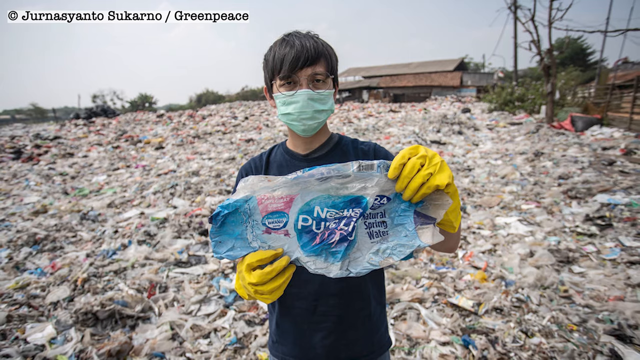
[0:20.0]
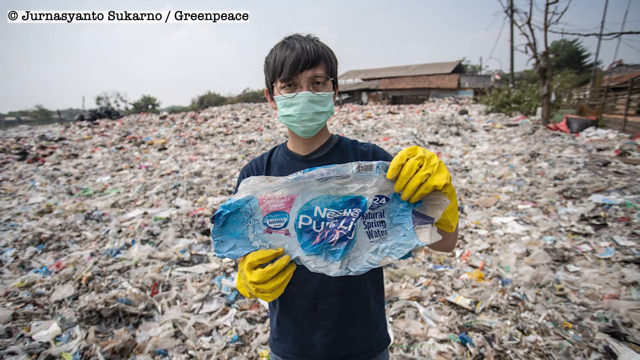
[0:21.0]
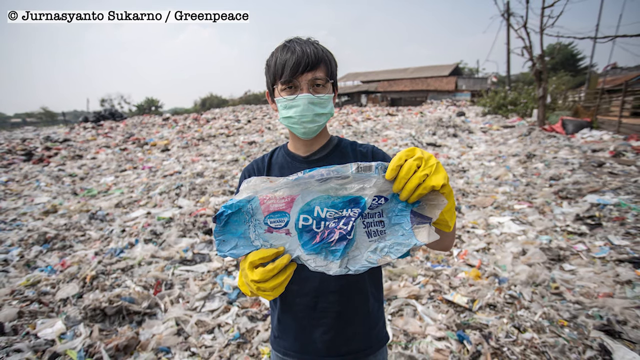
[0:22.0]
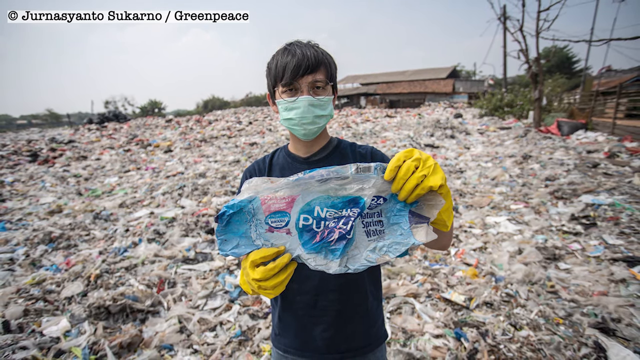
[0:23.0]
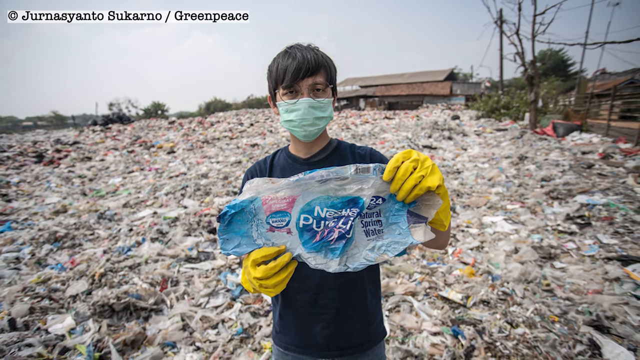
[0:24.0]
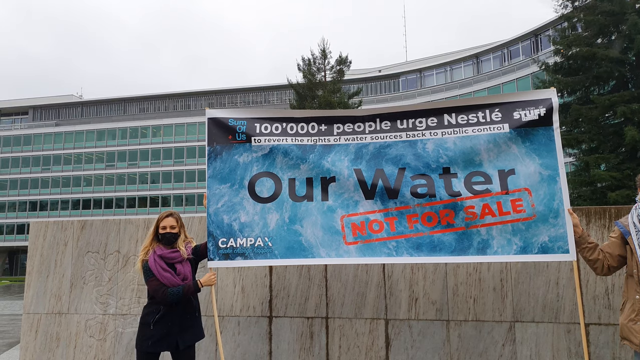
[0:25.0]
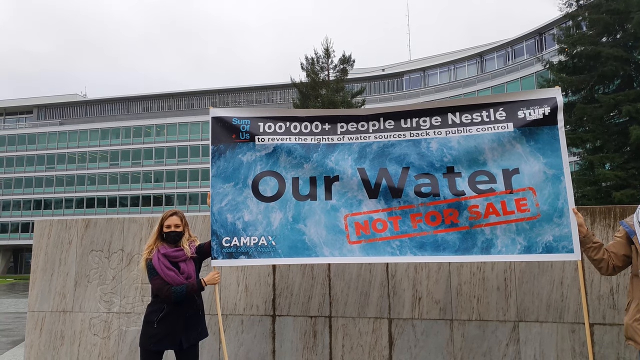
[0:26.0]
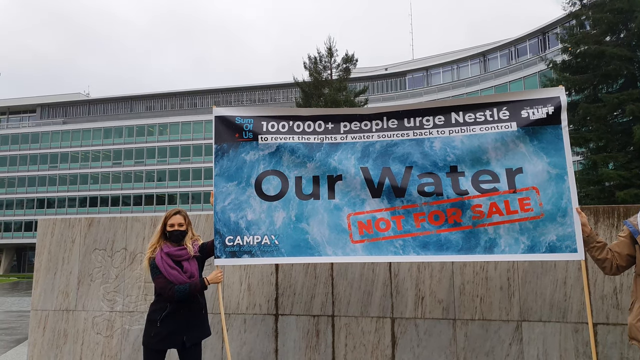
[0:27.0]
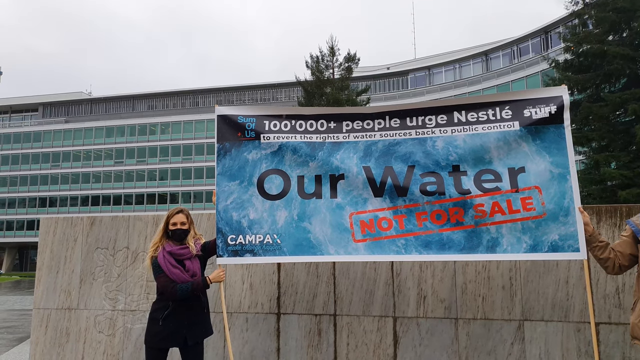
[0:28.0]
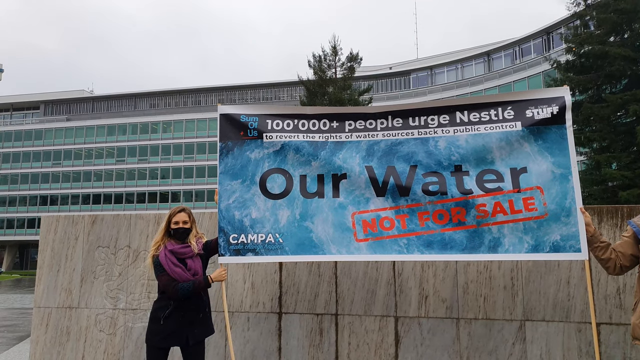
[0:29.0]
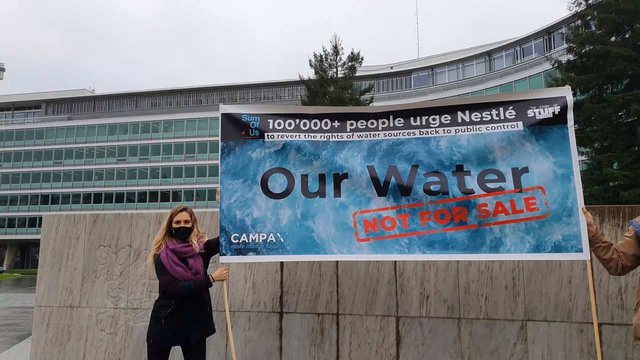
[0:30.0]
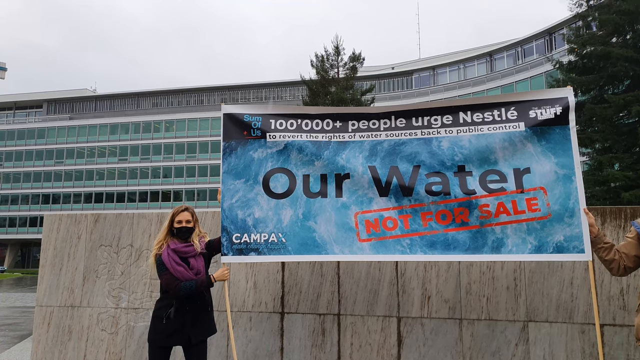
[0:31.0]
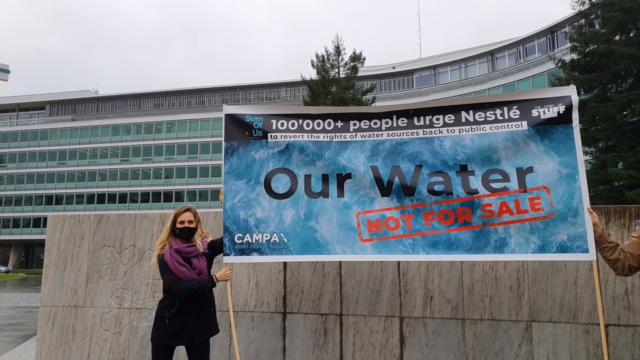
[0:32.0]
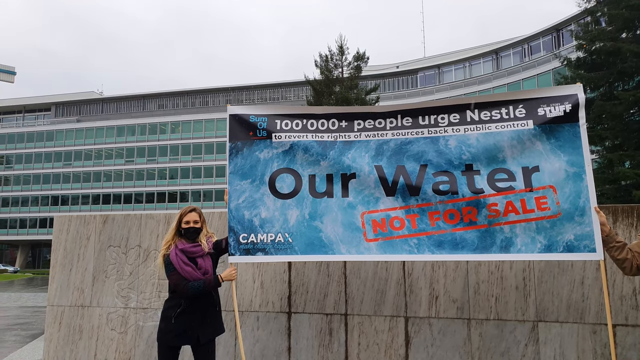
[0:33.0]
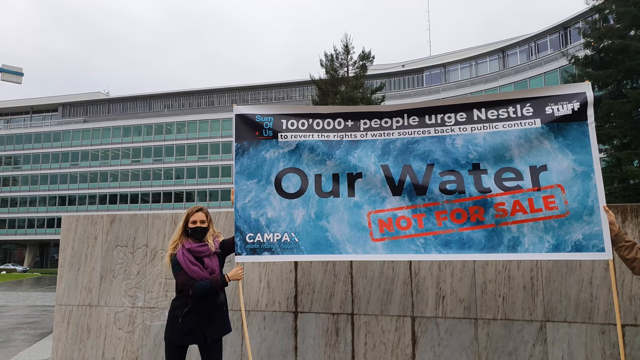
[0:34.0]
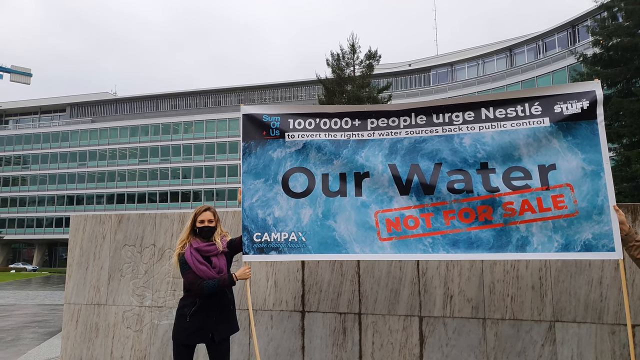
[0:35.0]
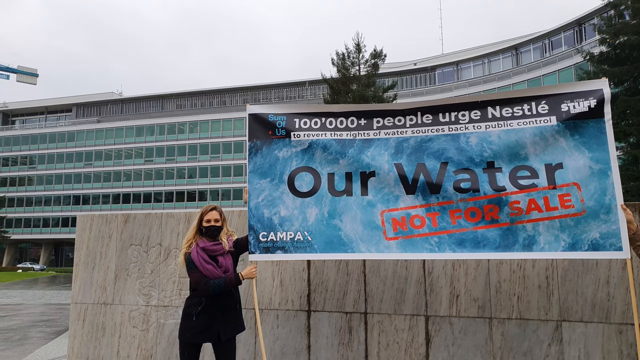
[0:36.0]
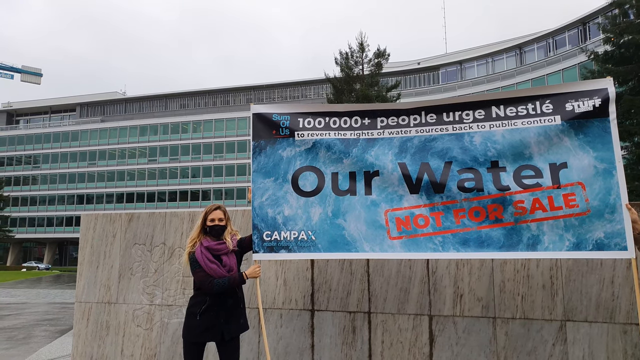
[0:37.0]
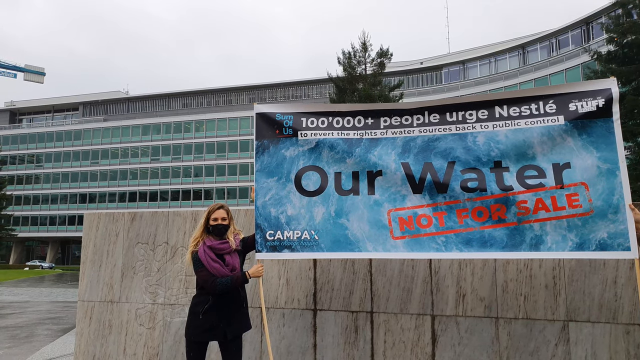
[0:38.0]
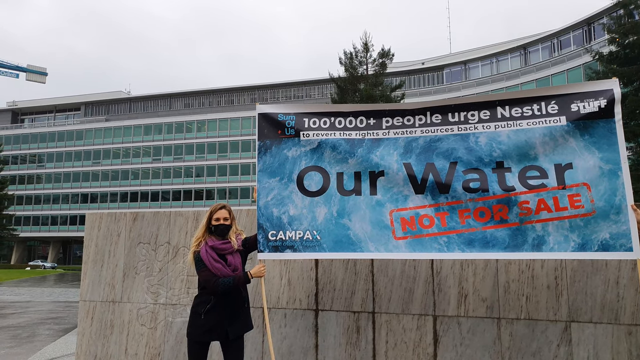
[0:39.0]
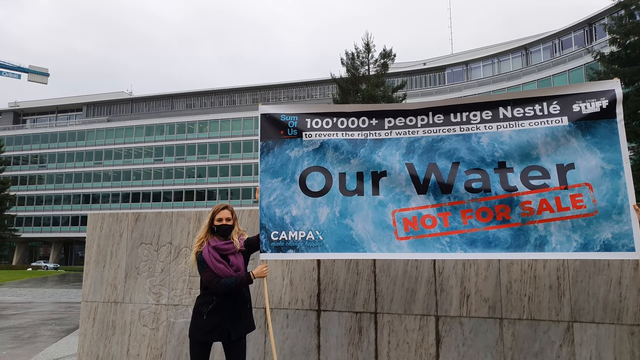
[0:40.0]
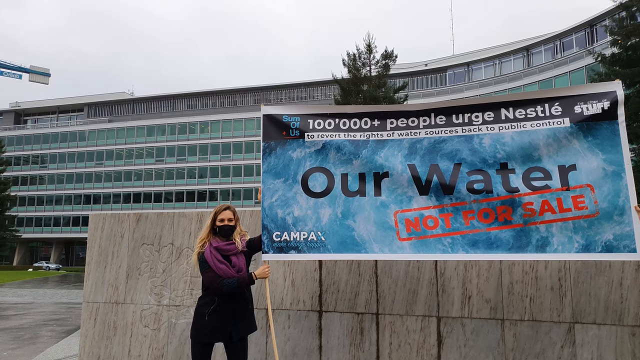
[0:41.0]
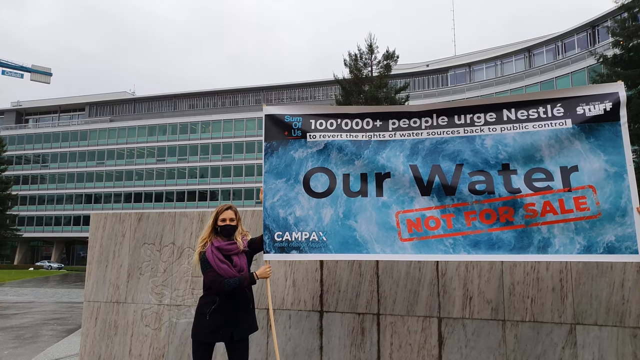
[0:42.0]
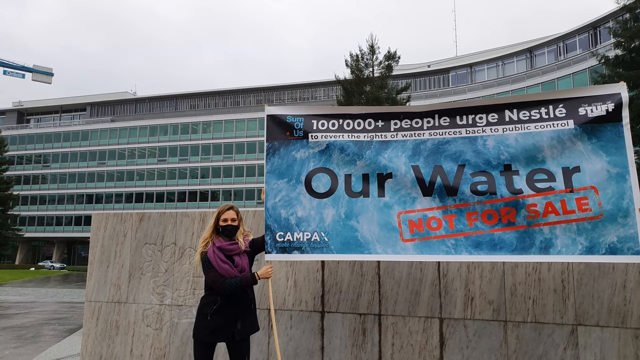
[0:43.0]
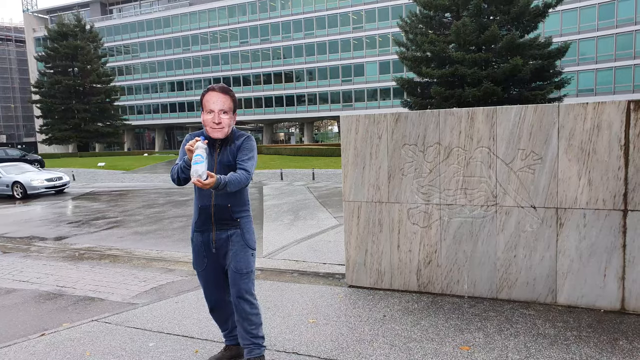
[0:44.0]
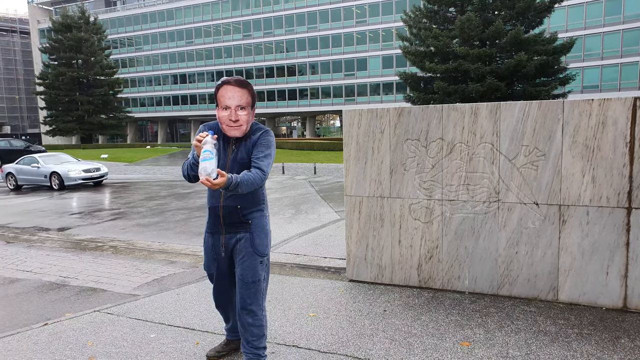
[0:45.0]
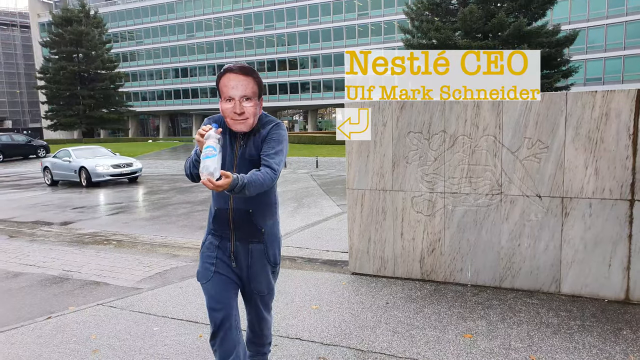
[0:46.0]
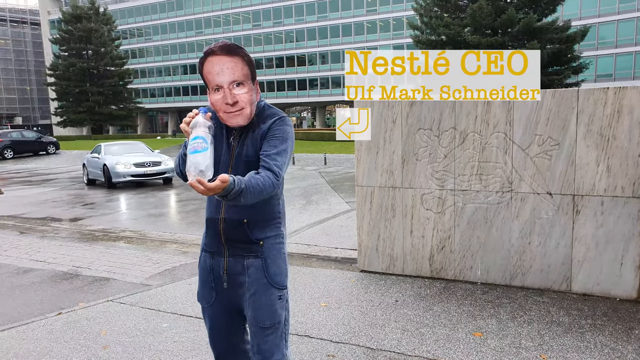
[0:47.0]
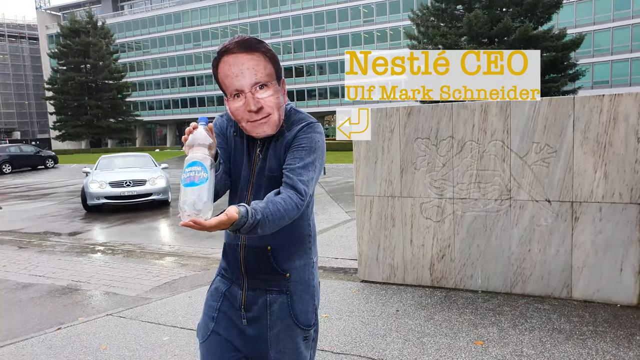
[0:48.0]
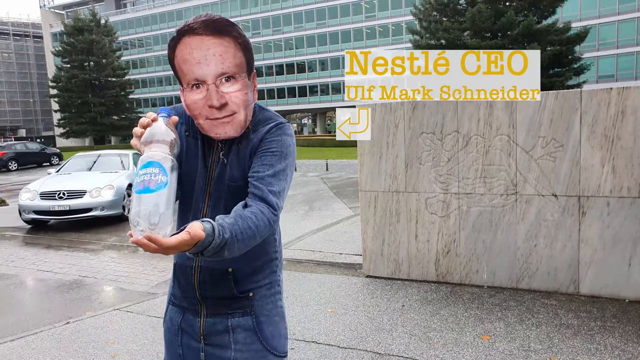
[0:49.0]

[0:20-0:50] The video shows something from Greenpeace, including the outside covering of a Nestle Pure Life Natural Spring Water bottle. A man stands in the middle of a big garbage area, maybe a landfill, with lots of garbage around him. He wears yellow gloves, a mask and glasses, and from his eyes he is not smiling; he looks very serious. The video returns to "our water, not for sale," with a message about reverting the water sources back to public control rather than private control. Someone then wears an obvious mask of the CEO, named Mark, pretending to be him, and holds up a water bottle.